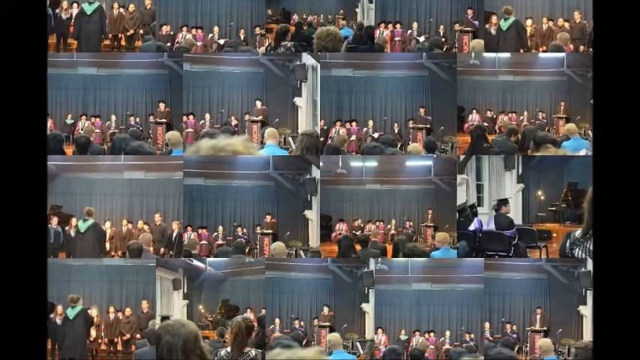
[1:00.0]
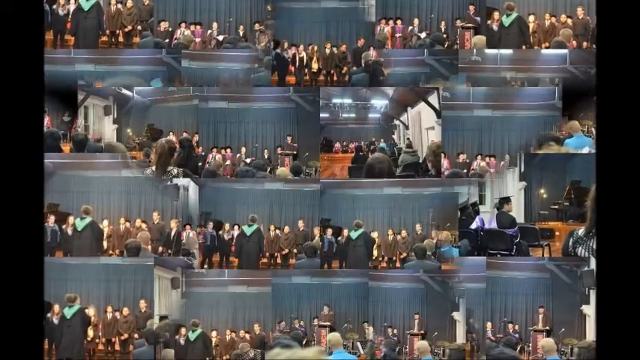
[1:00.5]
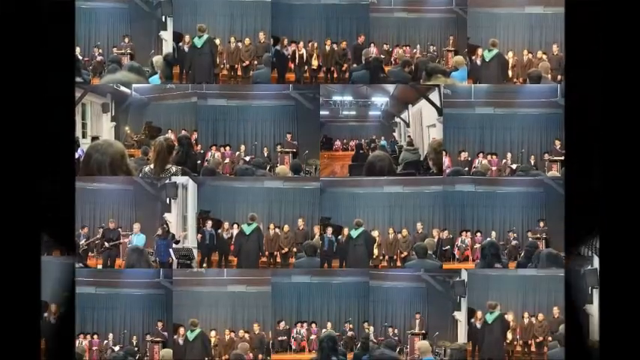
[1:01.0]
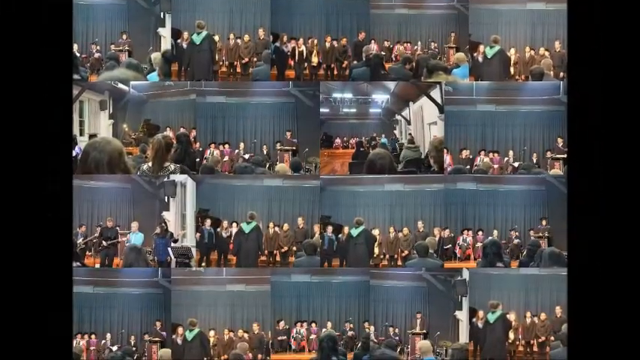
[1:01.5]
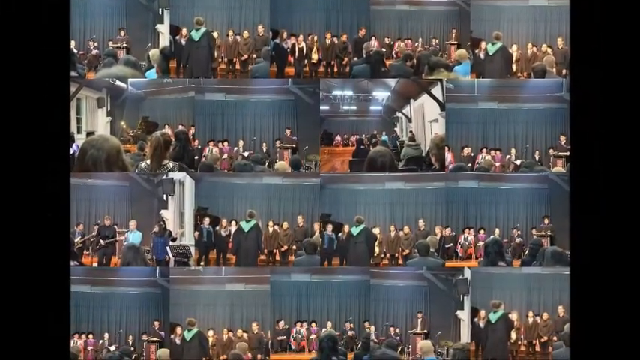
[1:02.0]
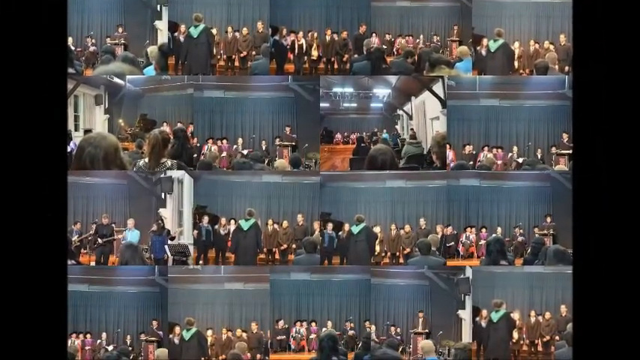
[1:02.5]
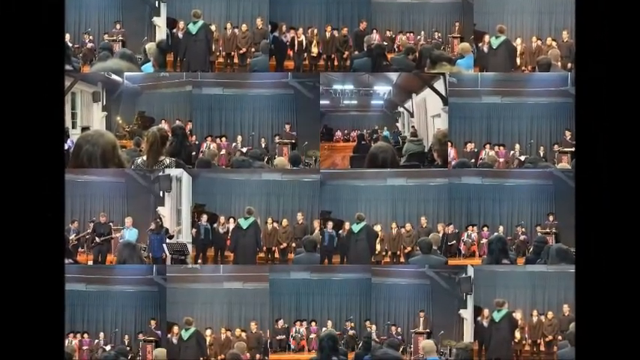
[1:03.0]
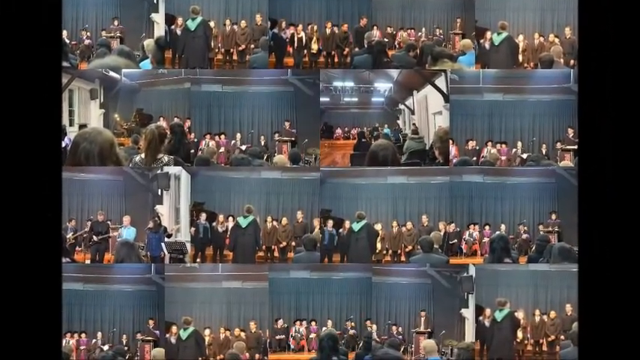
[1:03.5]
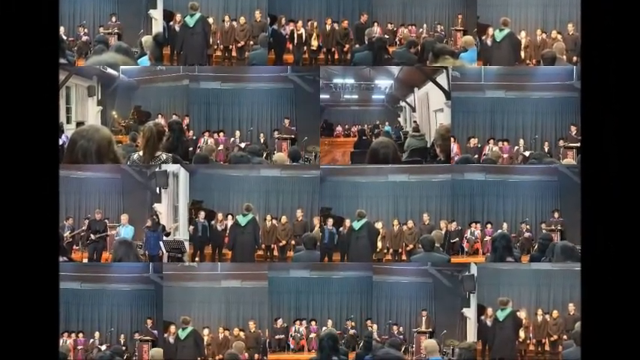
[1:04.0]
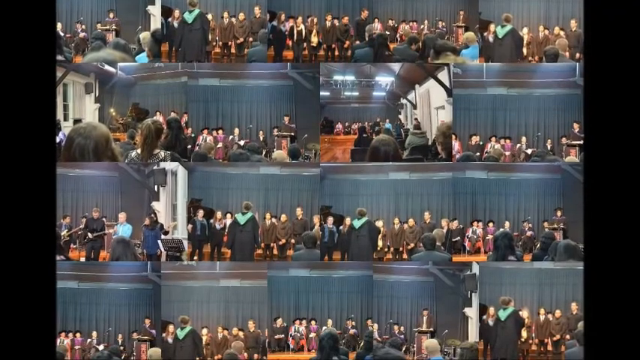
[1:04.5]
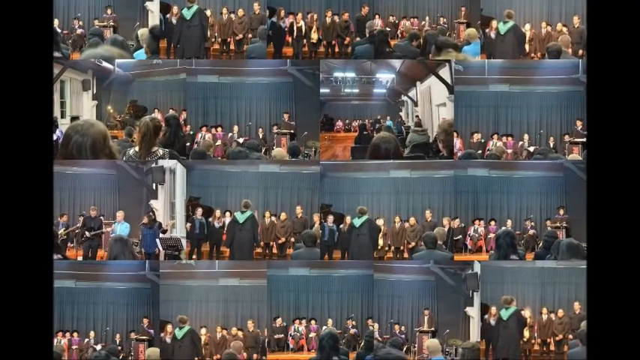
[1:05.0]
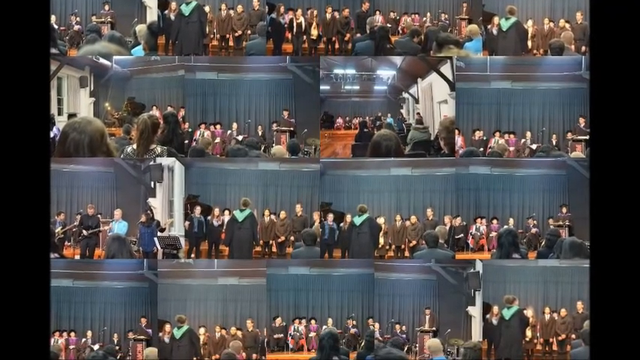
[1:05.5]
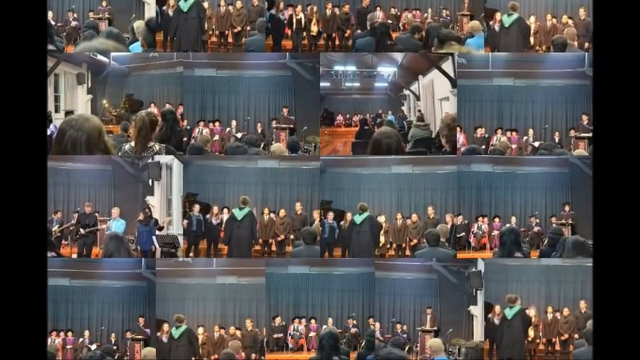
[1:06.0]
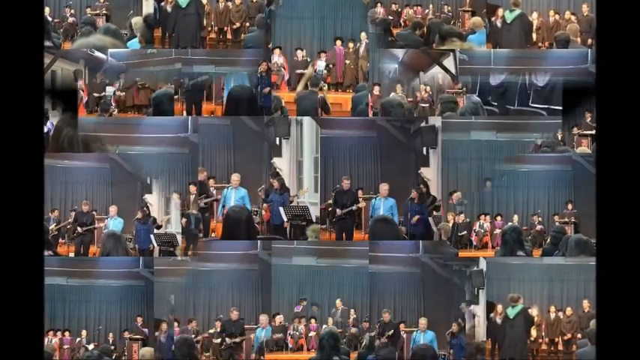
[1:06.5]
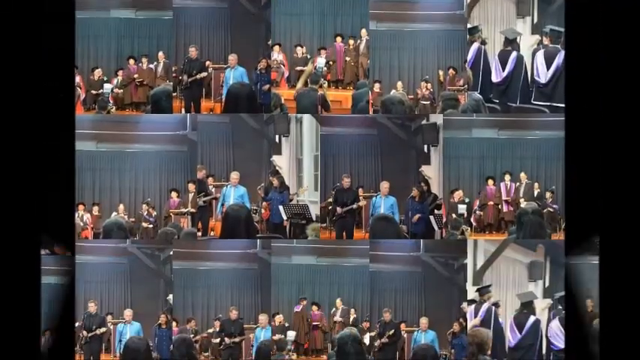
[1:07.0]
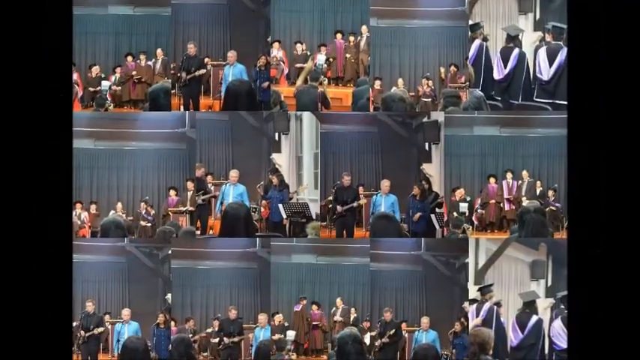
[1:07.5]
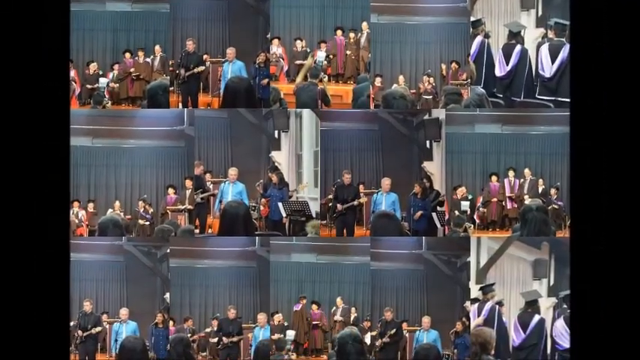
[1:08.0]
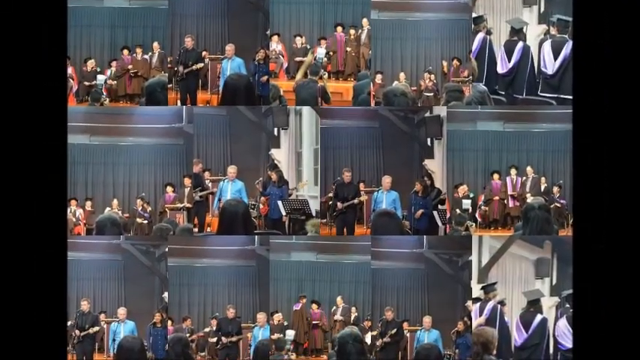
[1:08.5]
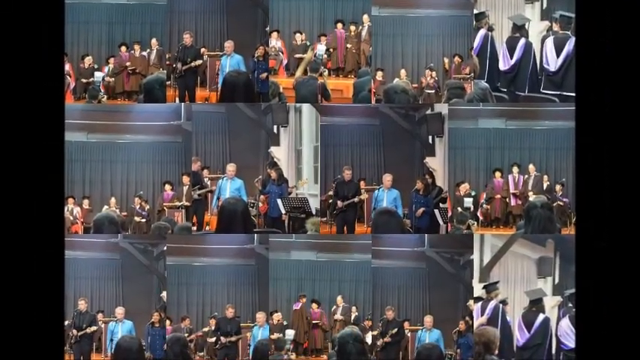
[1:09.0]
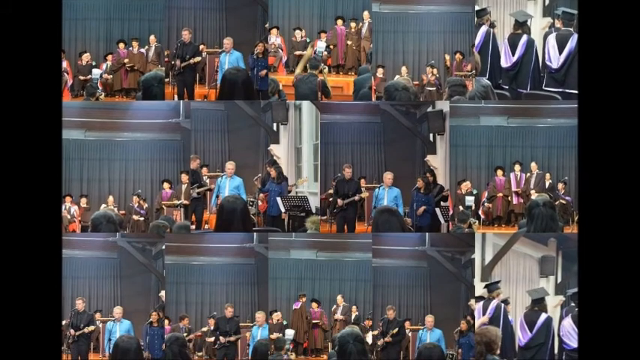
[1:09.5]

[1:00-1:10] The collages of the graduation on stage continue. The first collage still shows the person giving a speech, the president or dean, but most of its photos show the beginnings of what seems to be a musical performance, quite zoomed out. The second collage is more zoomed in on the musicians and singers. The most noticeable person is a guy in a blue shirt and a pale tie; there is also a woman in a denim shirt and a man in a black shirt.